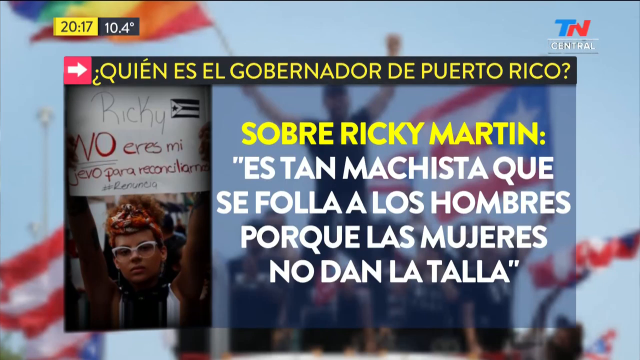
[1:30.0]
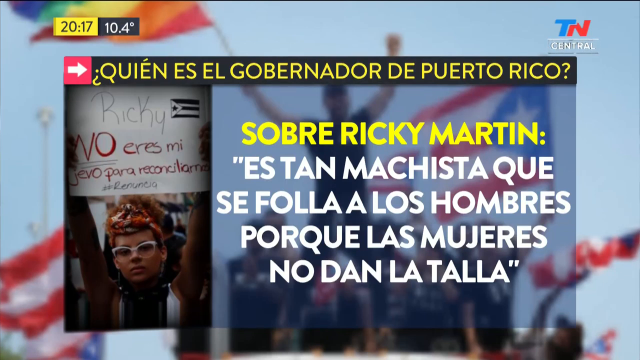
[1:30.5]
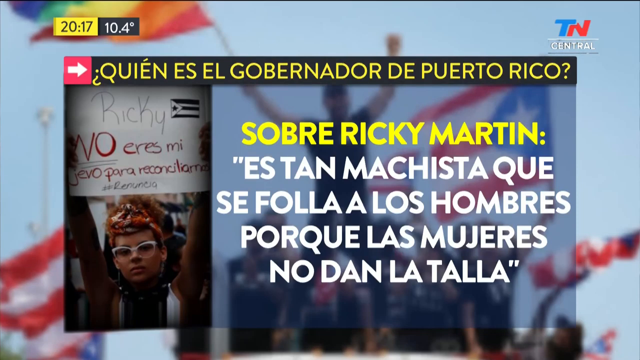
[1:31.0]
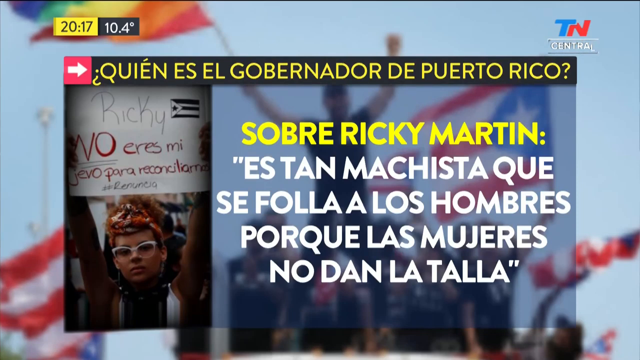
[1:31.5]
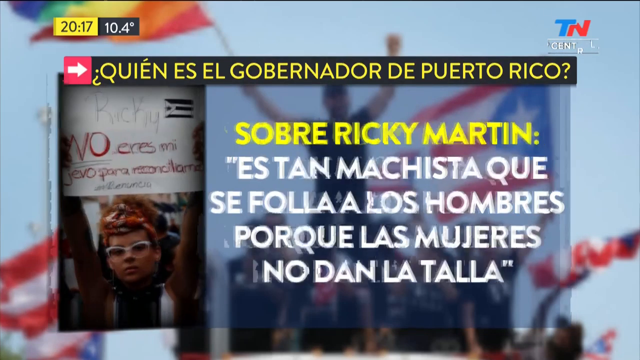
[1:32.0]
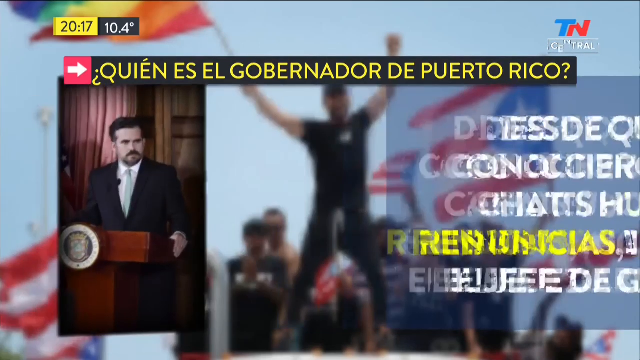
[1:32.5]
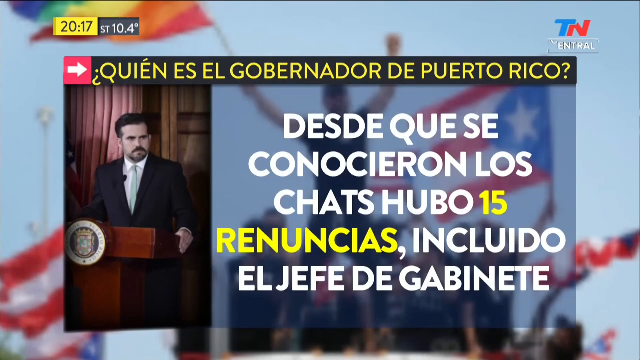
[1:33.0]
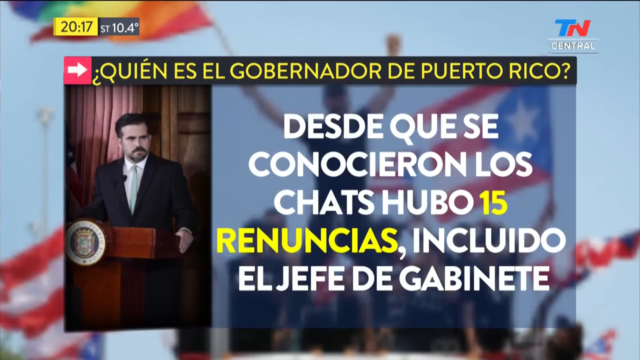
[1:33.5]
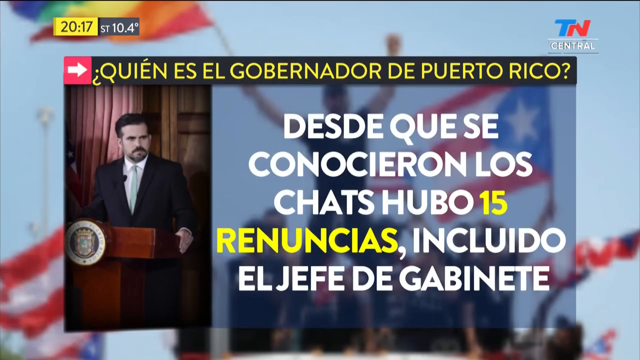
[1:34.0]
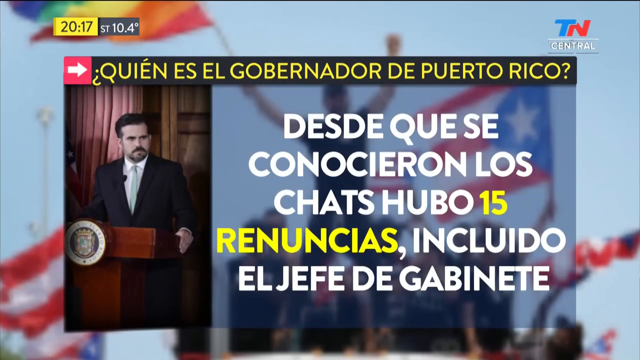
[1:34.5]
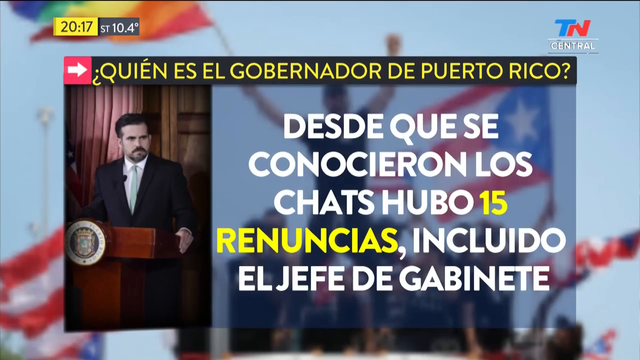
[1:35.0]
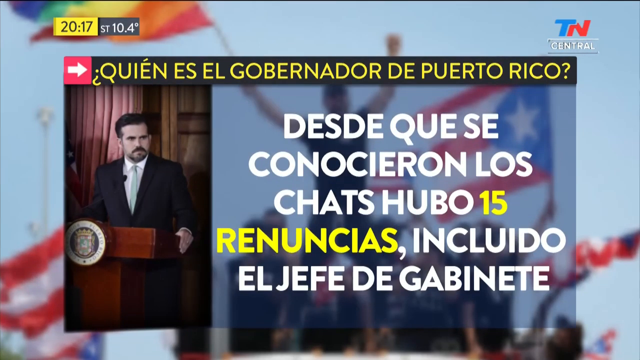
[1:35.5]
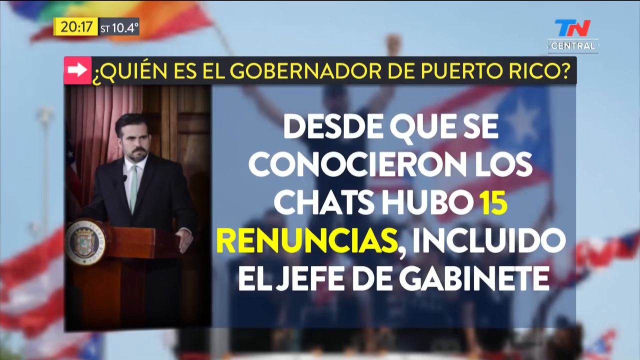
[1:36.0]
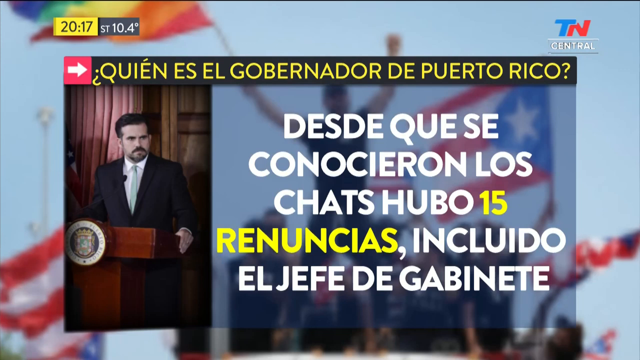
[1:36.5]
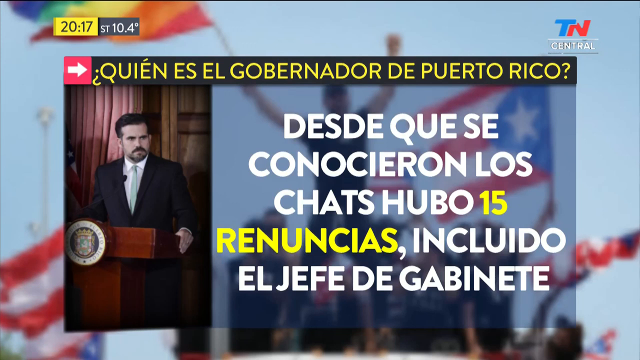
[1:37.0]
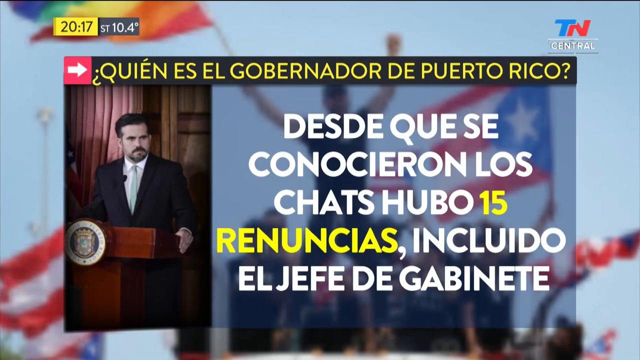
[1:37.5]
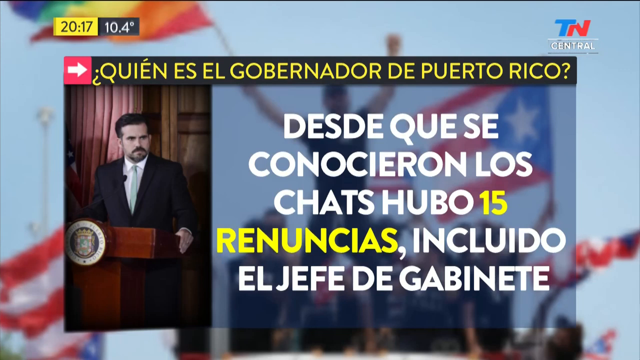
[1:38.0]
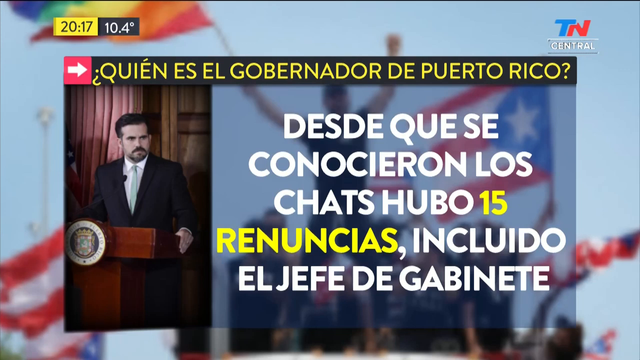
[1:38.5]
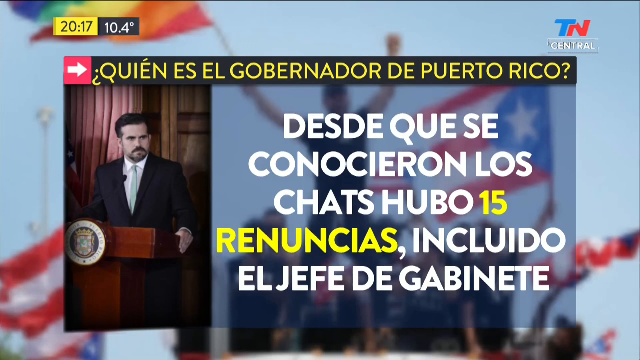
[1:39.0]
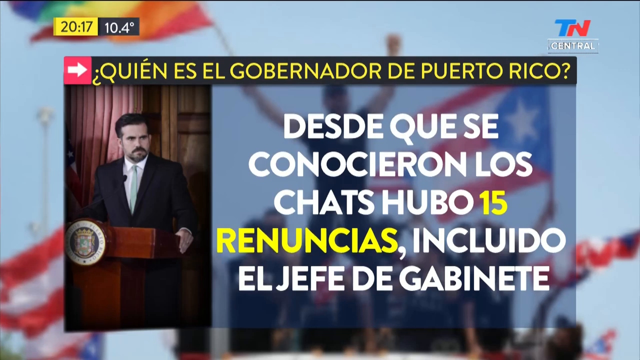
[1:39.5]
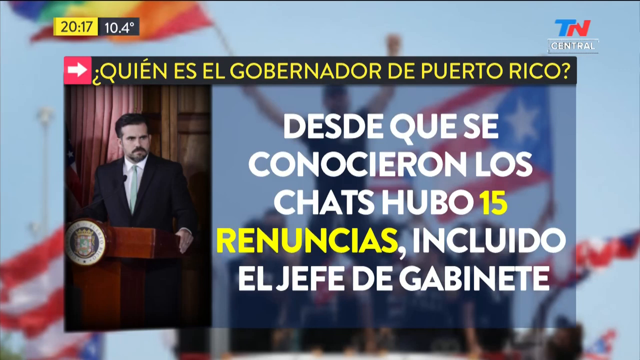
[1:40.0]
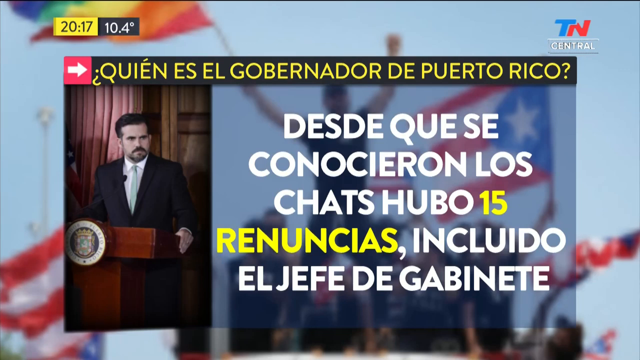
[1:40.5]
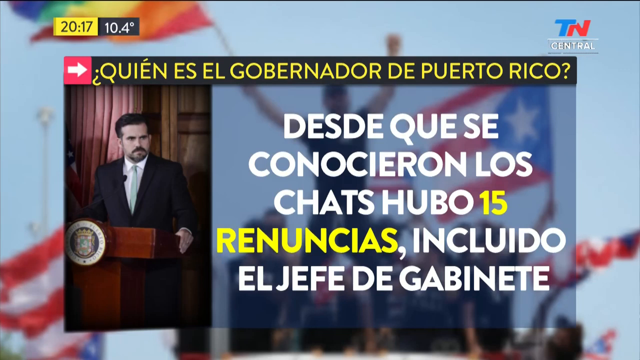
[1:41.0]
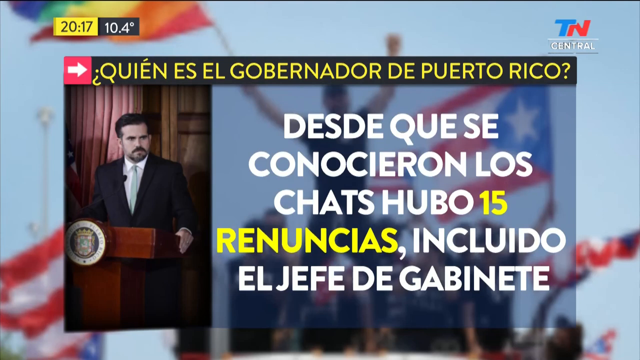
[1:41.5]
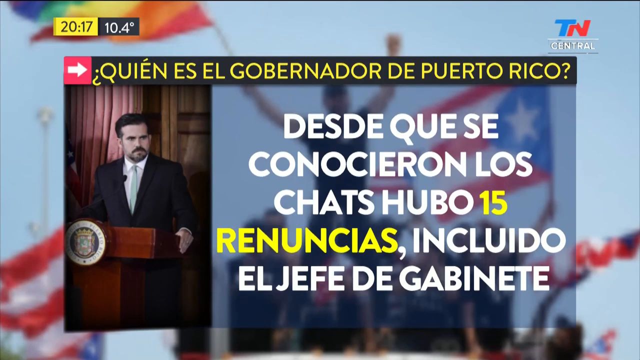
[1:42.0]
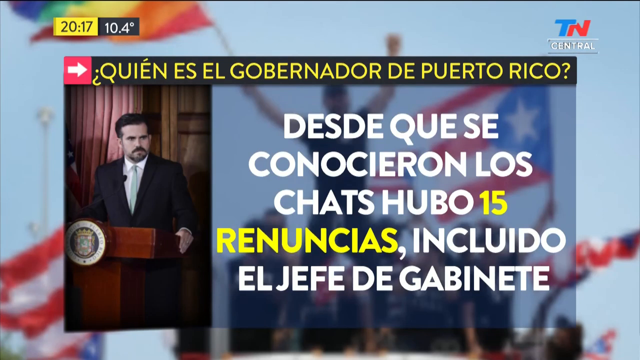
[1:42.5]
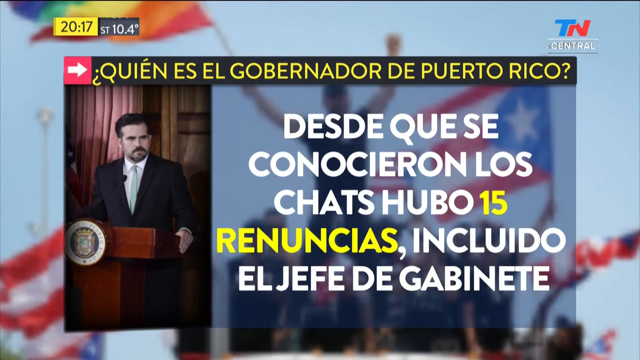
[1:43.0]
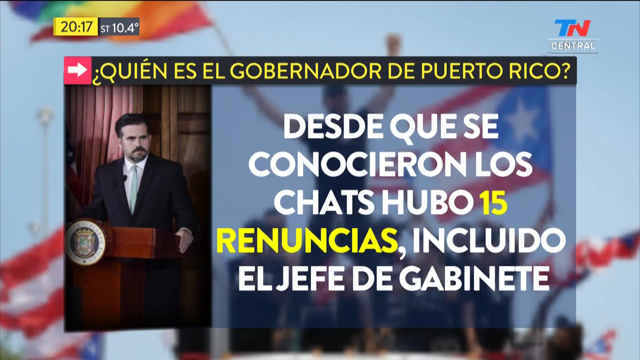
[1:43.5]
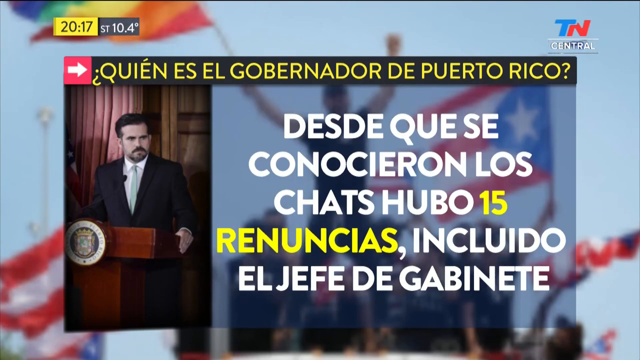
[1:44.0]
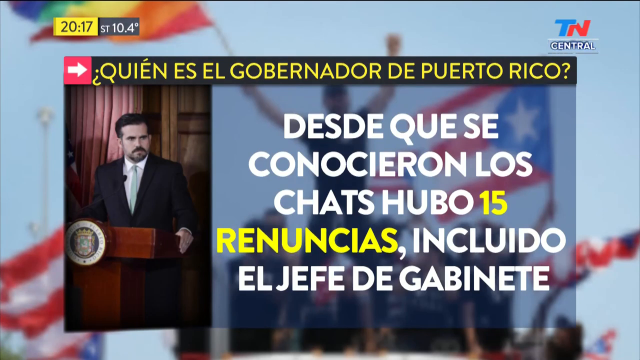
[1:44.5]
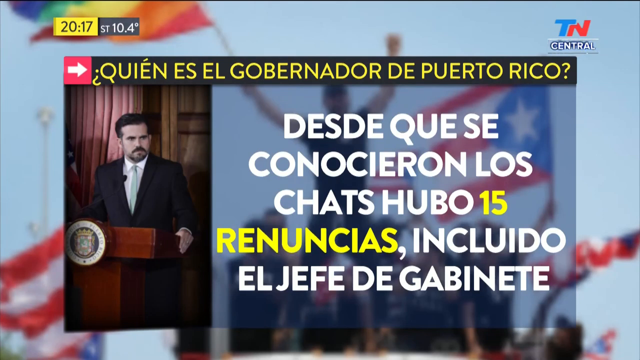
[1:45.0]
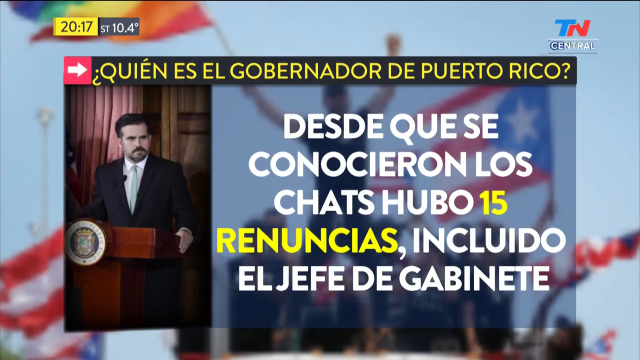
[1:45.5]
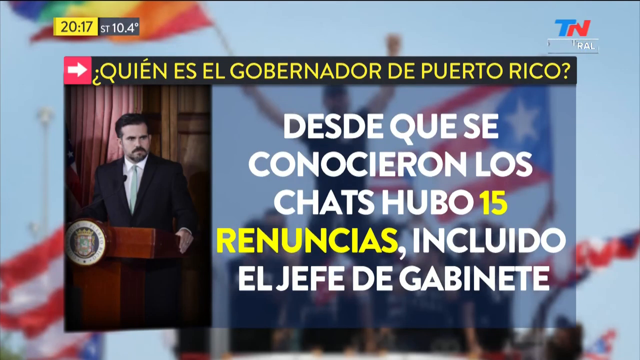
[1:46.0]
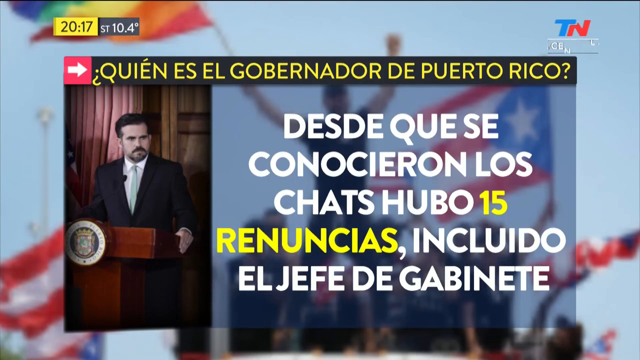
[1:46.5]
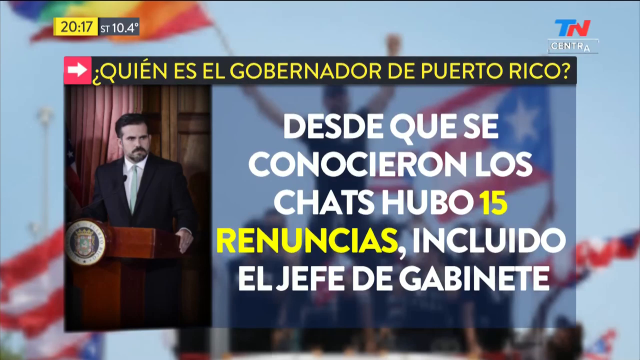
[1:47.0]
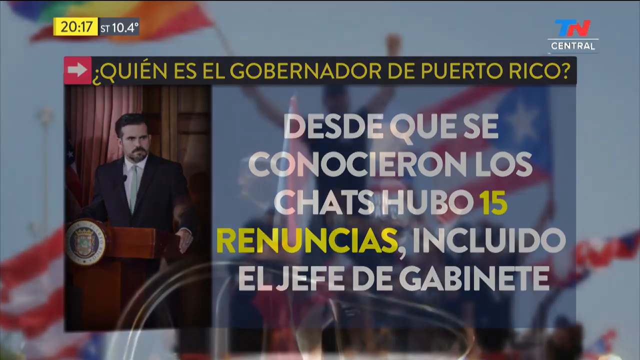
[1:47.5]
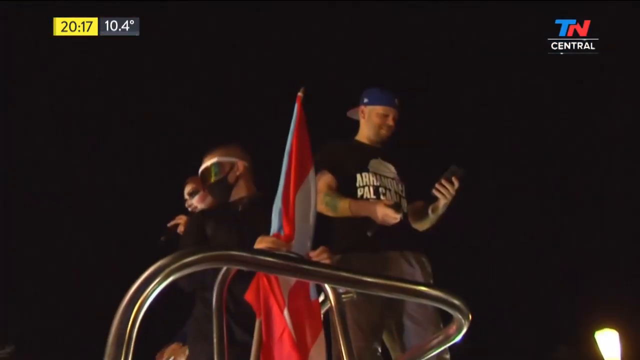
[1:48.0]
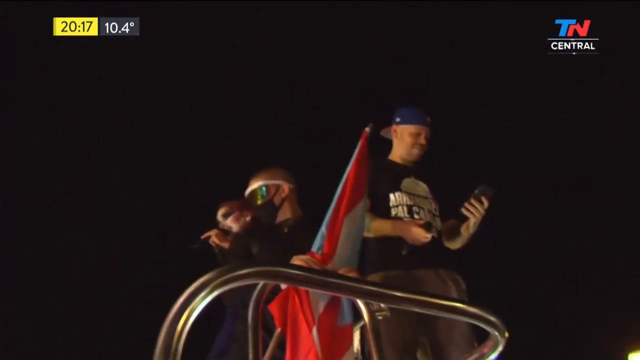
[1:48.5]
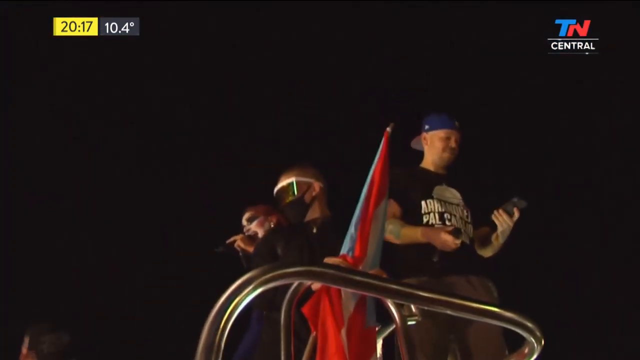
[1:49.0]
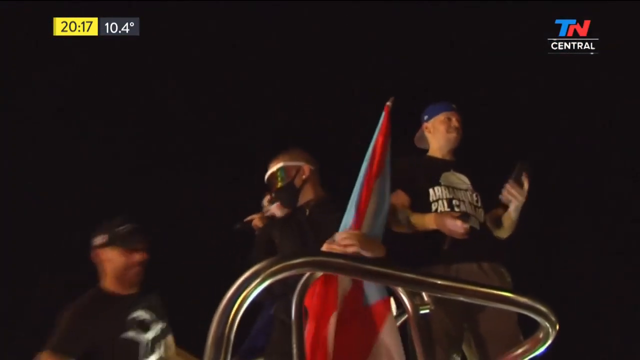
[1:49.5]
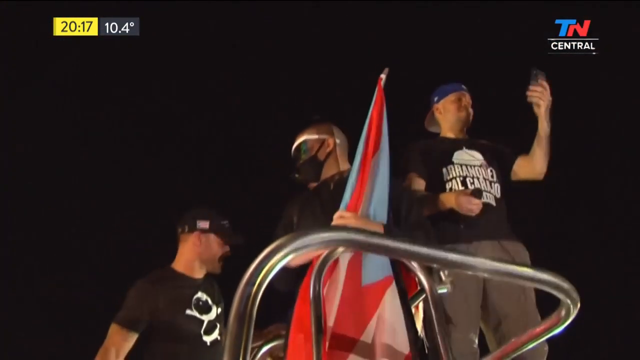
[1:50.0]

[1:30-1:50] Men in suits are at a podium, apparently ready to address the press or the nation. A person, possibly one of the protesters, is standing on a high object, holding a phone and filming himself and the situation. The politician or representative appears tense. Among the people, one is holding a flag and another is holding a phone, taking pictures or filming. It seems to be a protest.